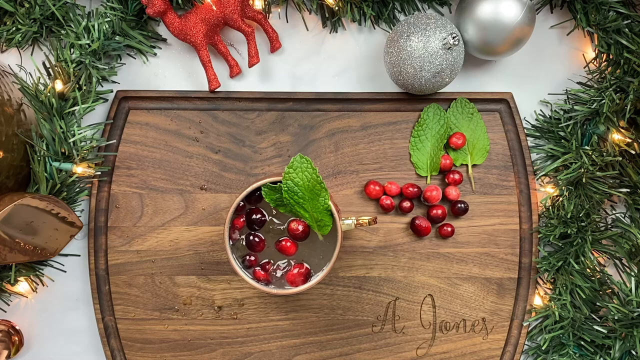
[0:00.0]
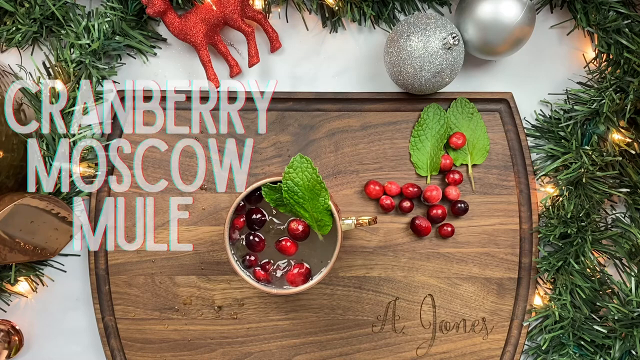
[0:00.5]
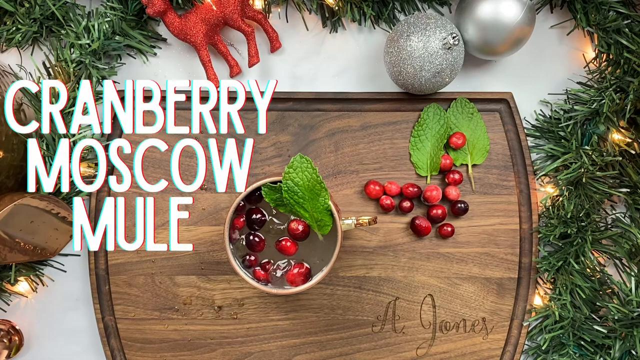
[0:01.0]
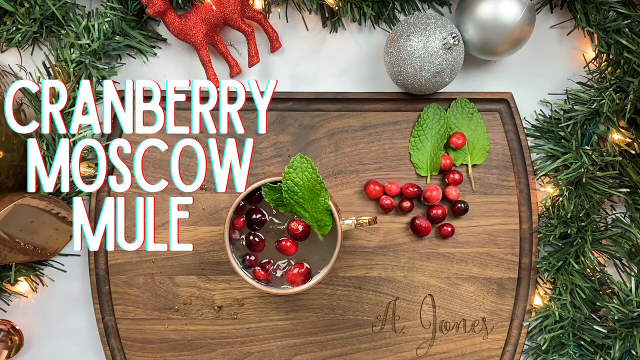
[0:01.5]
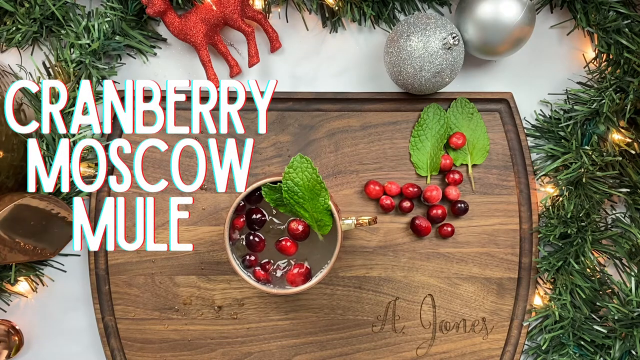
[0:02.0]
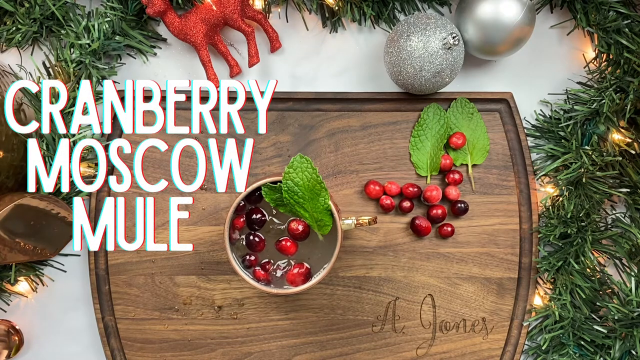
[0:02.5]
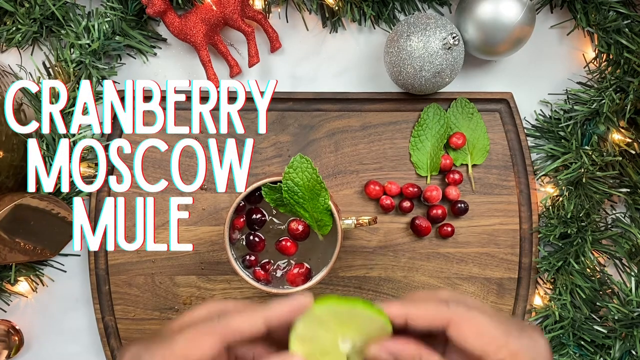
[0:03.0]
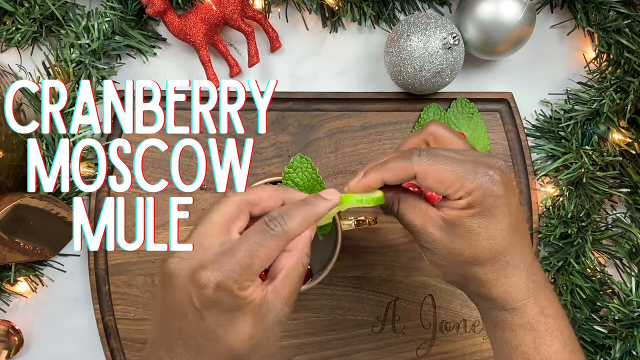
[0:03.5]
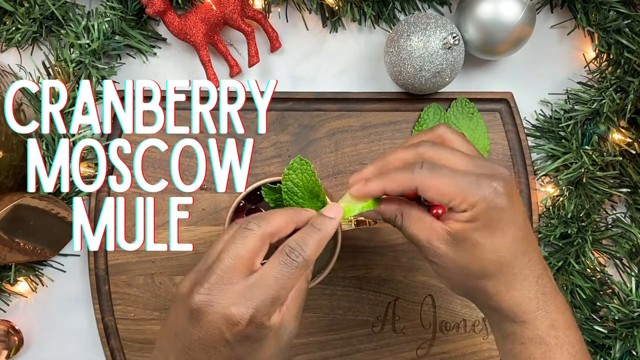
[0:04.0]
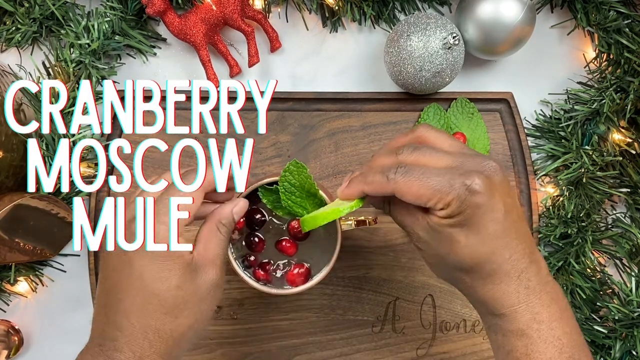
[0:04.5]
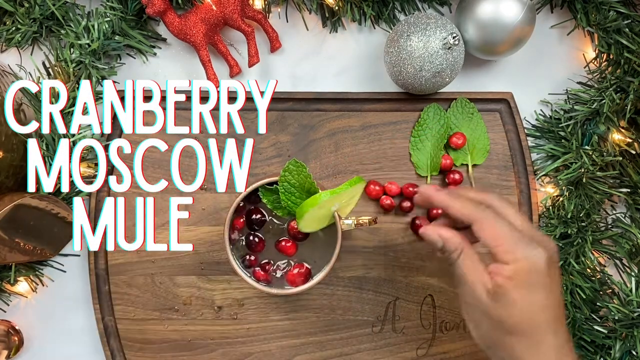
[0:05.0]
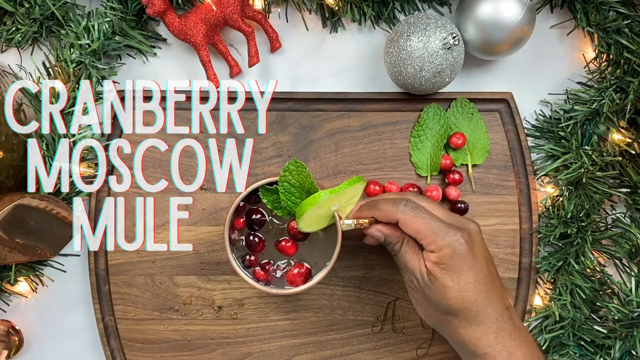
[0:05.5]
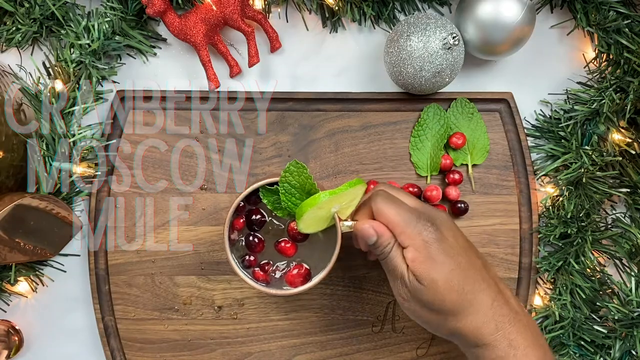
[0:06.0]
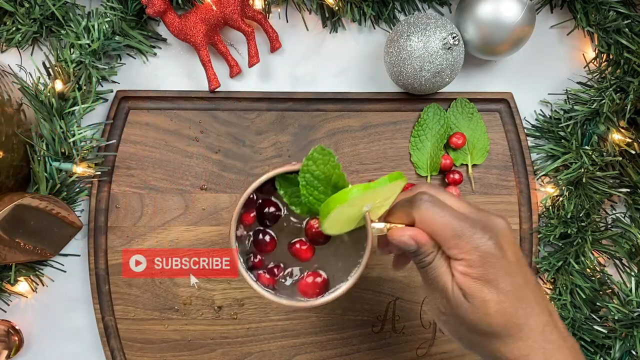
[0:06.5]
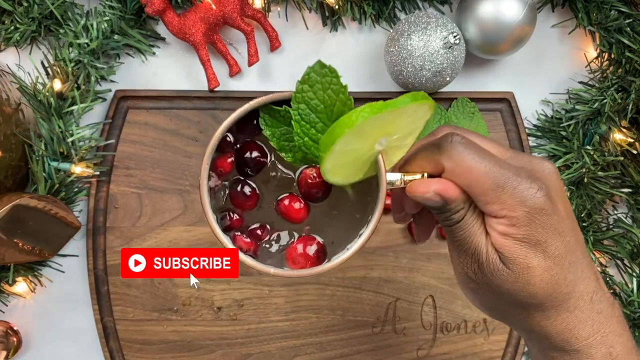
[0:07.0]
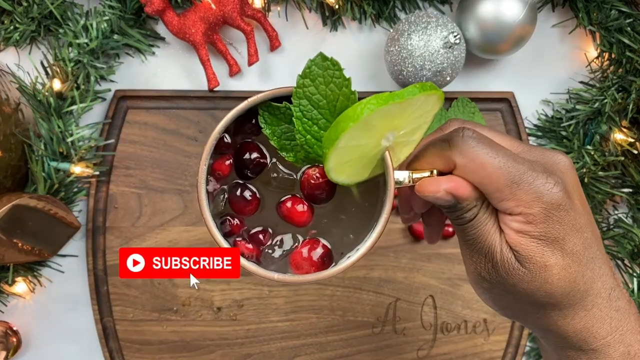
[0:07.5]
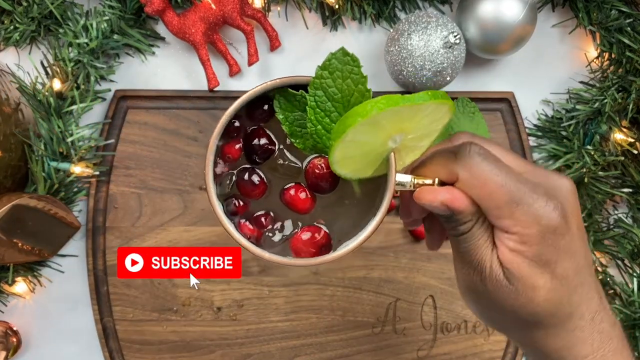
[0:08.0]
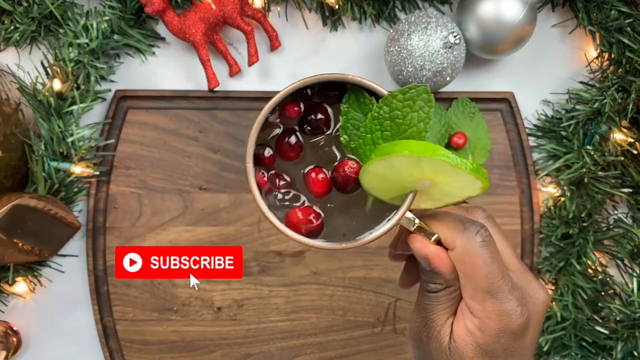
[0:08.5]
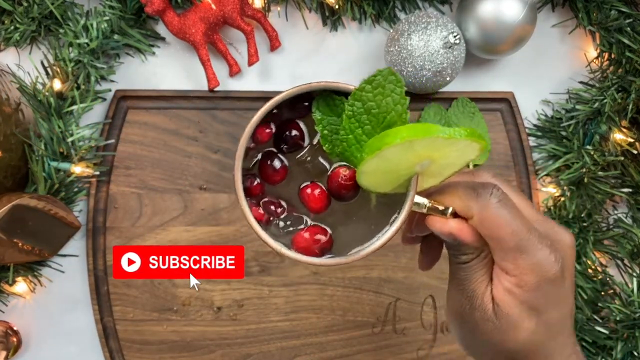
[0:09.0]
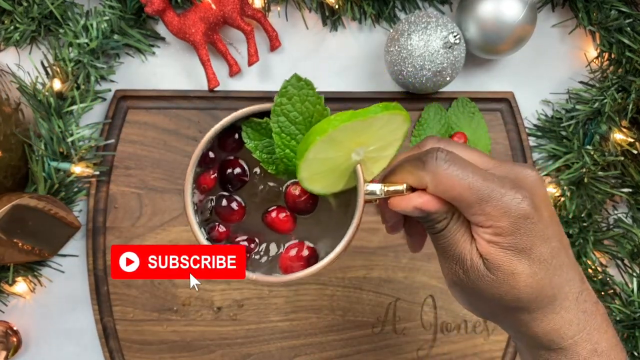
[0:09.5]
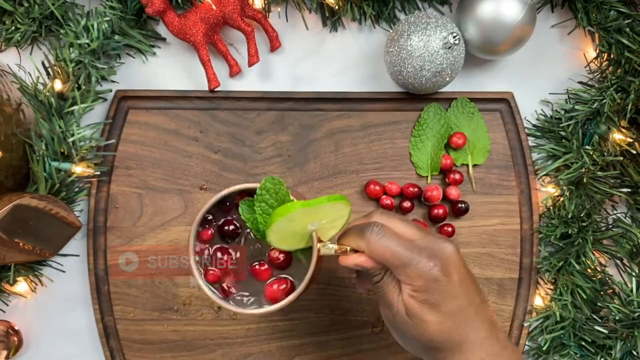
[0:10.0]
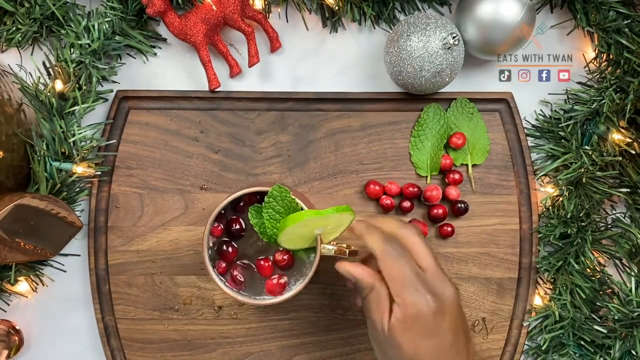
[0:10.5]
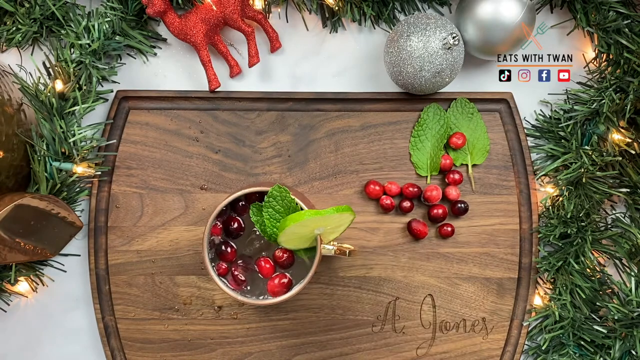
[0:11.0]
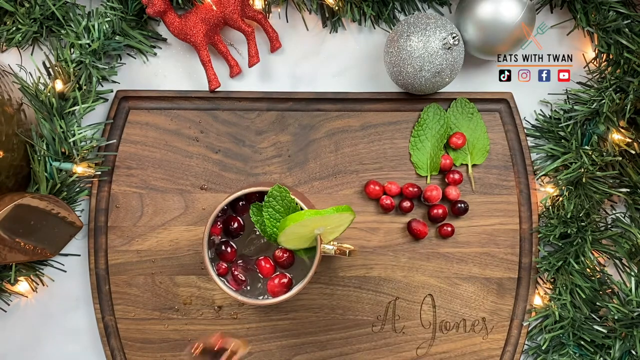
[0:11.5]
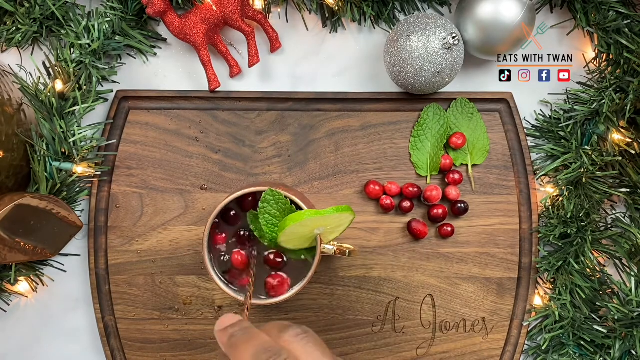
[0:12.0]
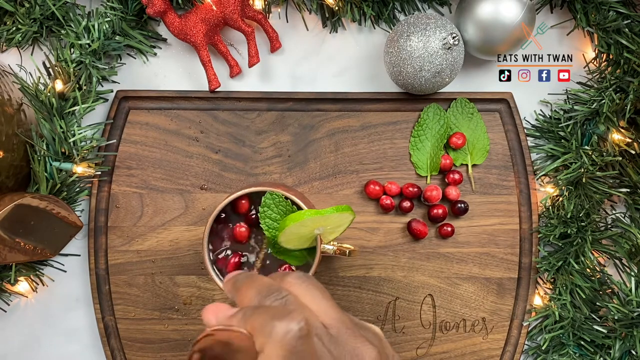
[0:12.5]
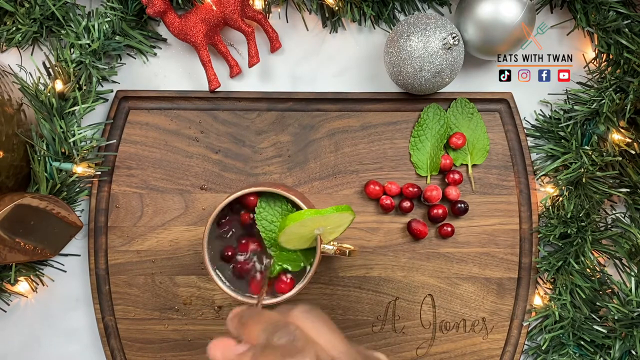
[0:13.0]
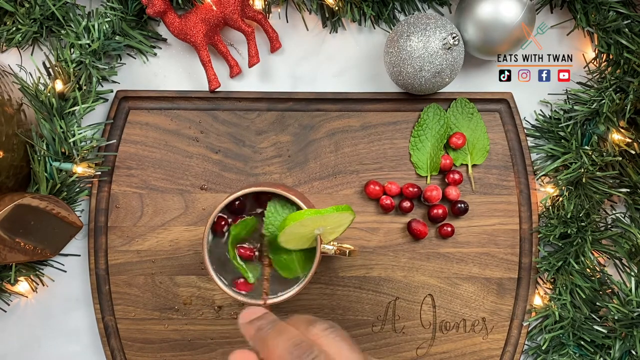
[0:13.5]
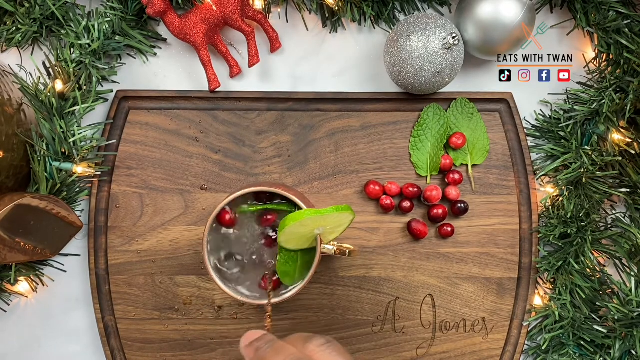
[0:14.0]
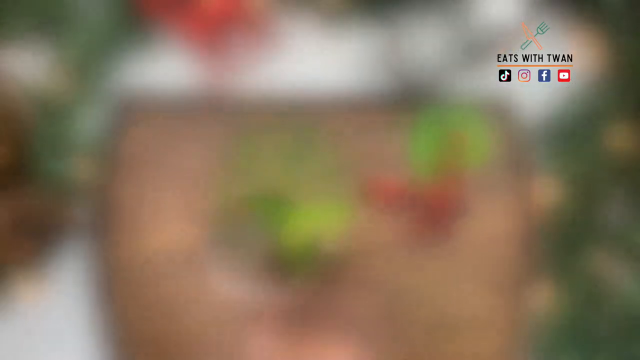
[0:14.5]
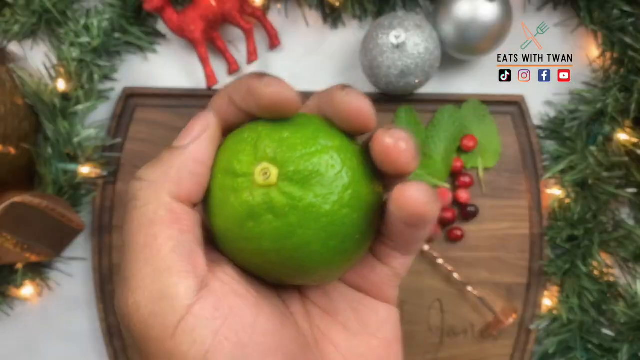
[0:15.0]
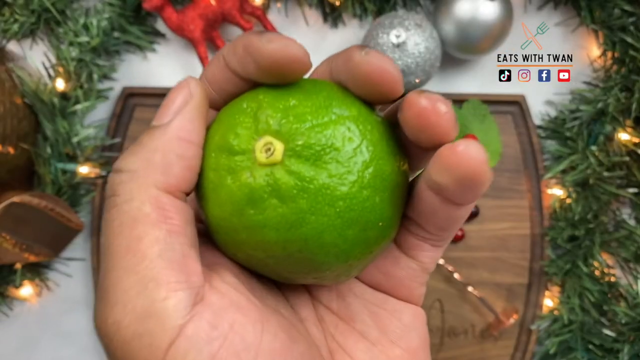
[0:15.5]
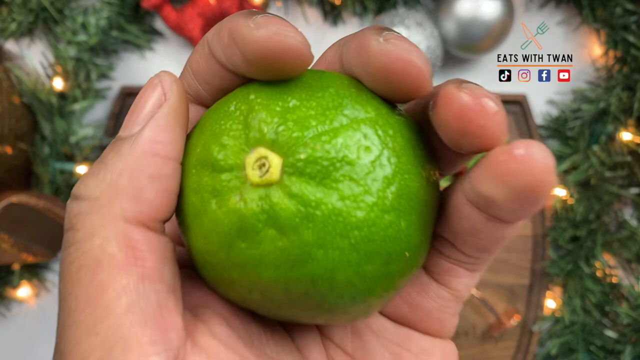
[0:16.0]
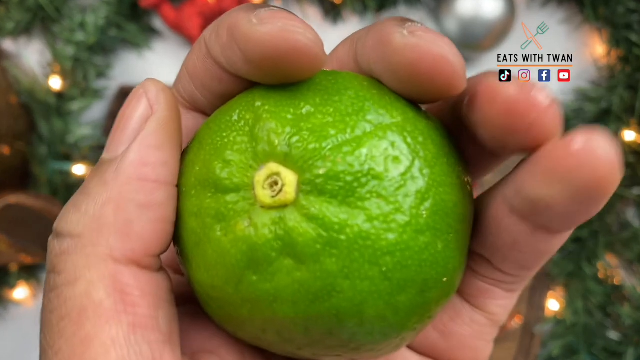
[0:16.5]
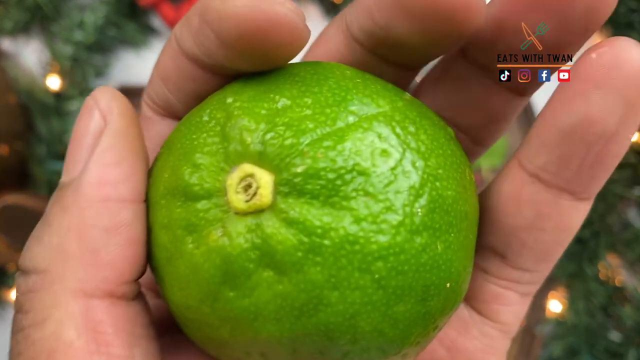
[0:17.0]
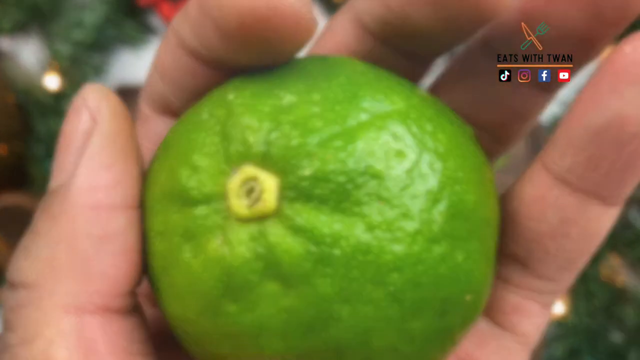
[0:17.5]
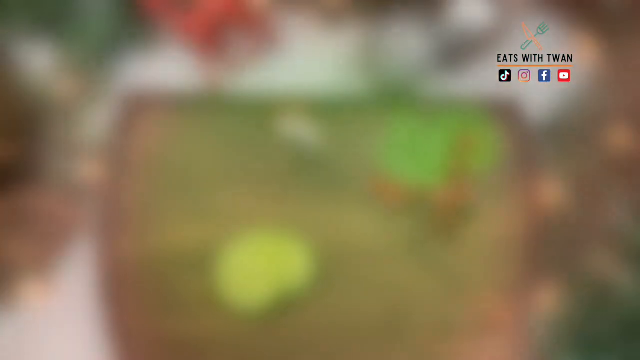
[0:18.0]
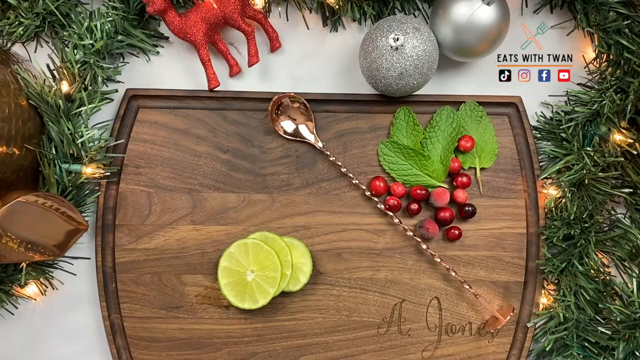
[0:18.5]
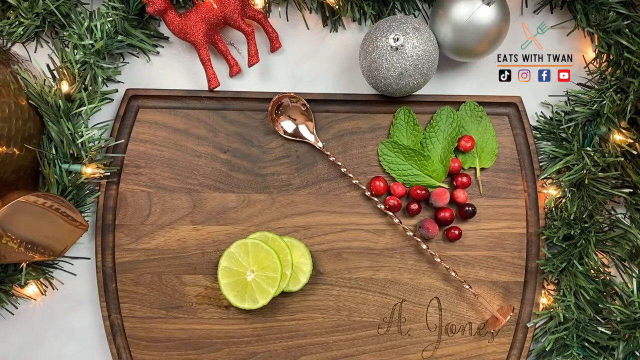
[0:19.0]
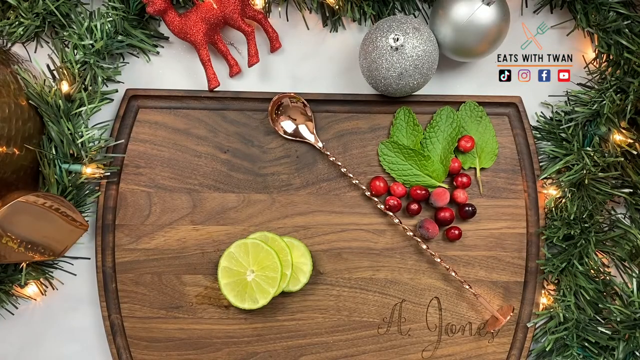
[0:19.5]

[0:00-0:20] A top-down point of view shows a cutting board, with the words "Cranberry Moscow Mule" on the screen. Hands appear over the cutting board and a mug, putting some limes into a drink that has pomegranates and green leaves in it, then putting something like a stick into it and stirring it around. A hand comes up super close to the camera, bringing some type of green fruit or vegetable up to the lens. The view returns to the cutting board, which holds three limes, with red pomegranates and leaves off to the side. Christmas-related decorations and ornaments line the edges of the board, which is a brown wooden cutting board.